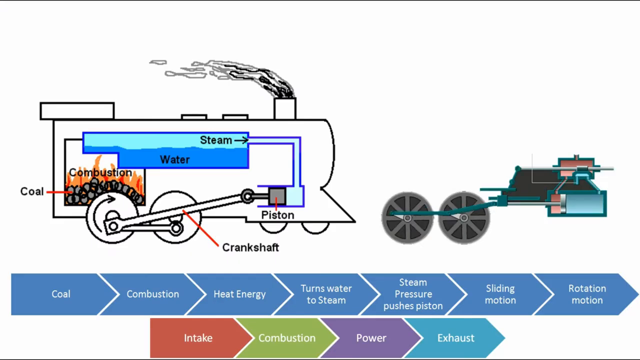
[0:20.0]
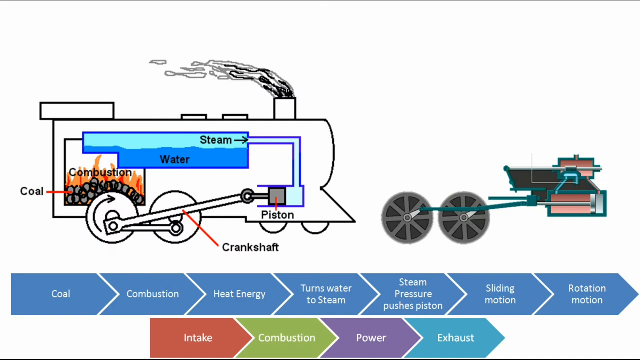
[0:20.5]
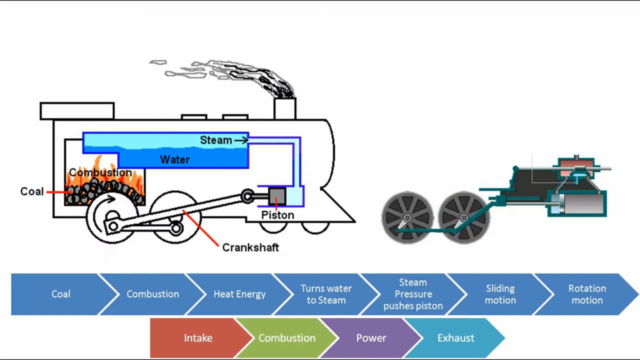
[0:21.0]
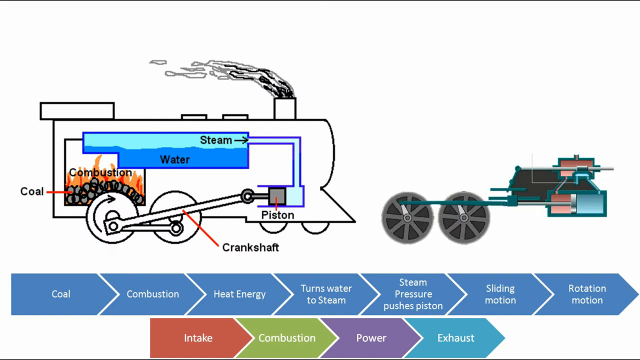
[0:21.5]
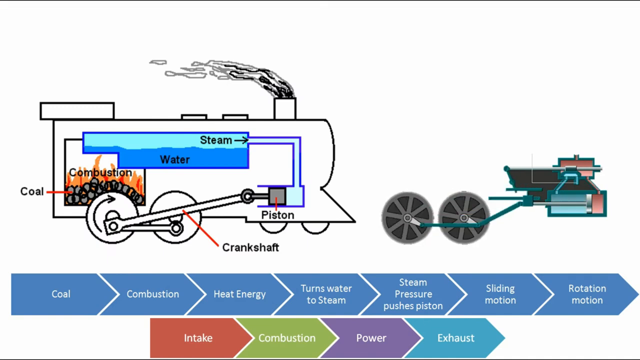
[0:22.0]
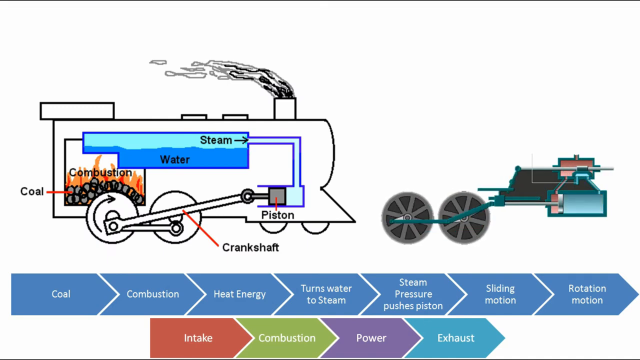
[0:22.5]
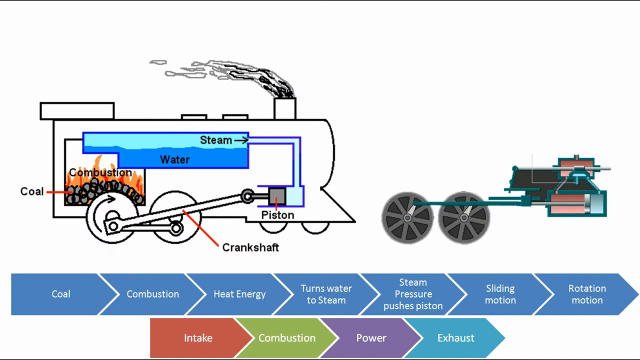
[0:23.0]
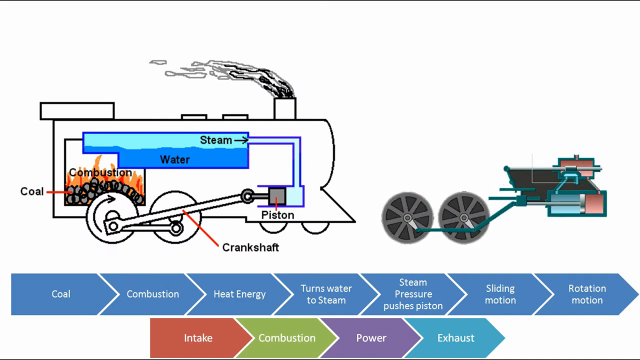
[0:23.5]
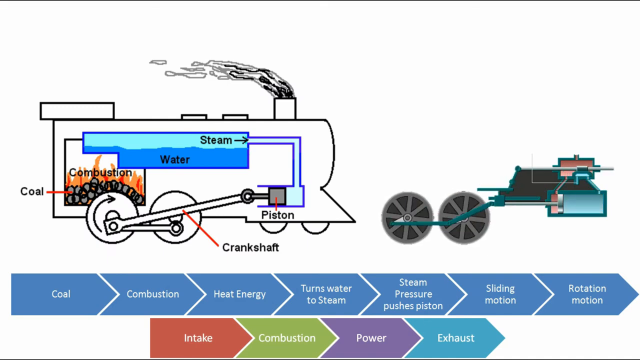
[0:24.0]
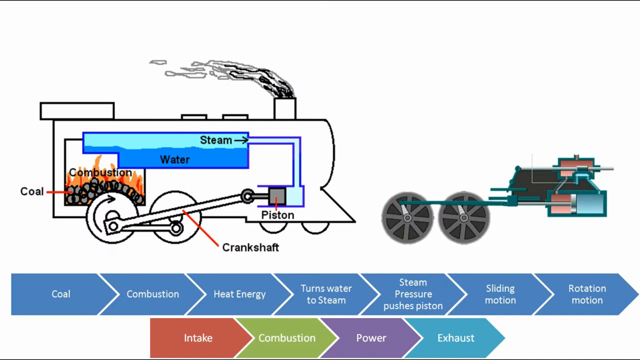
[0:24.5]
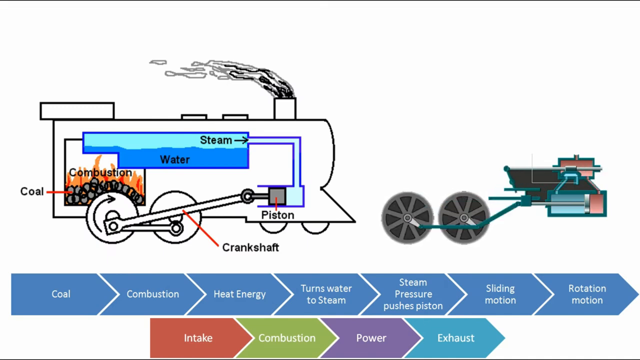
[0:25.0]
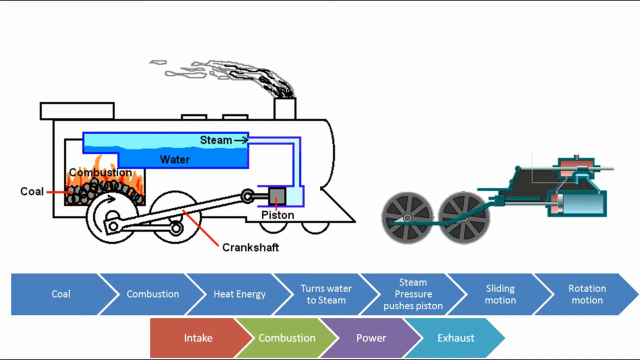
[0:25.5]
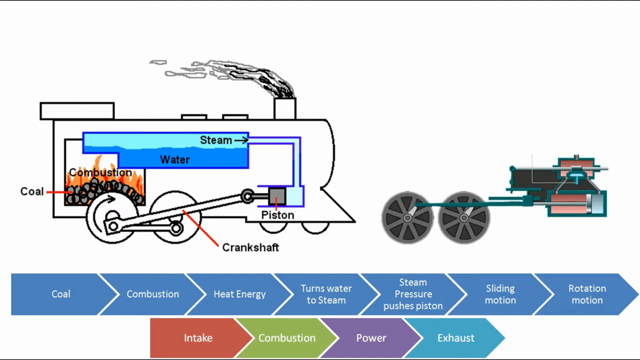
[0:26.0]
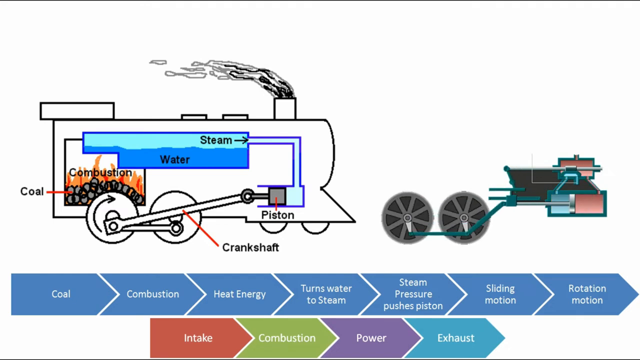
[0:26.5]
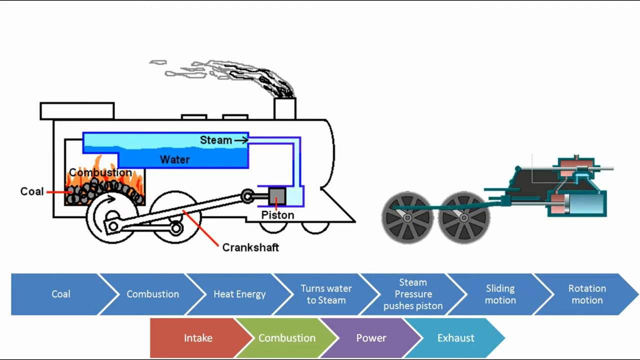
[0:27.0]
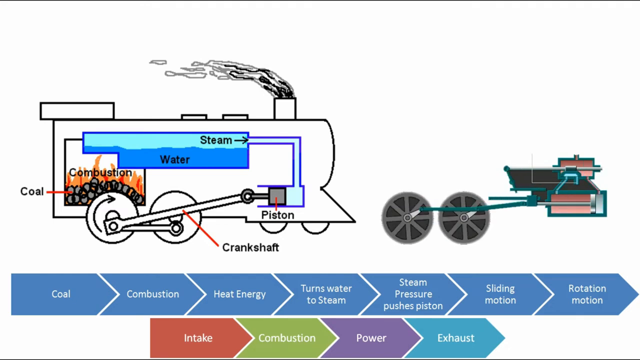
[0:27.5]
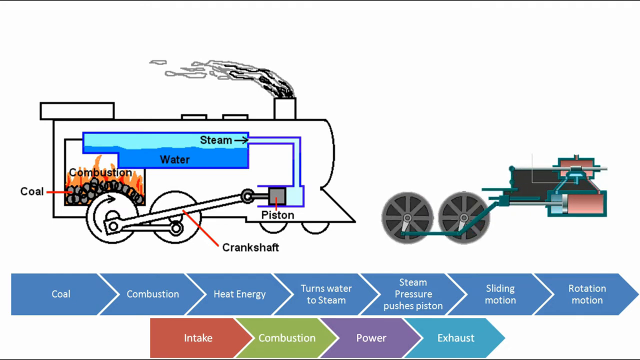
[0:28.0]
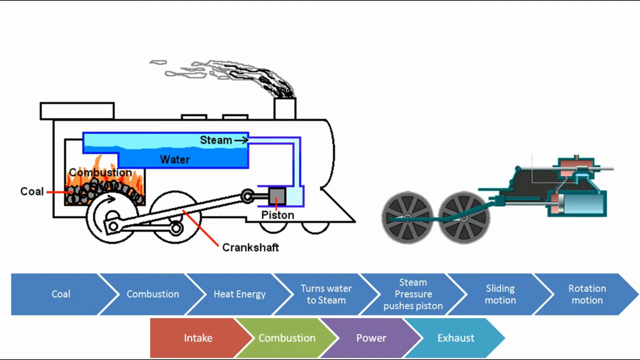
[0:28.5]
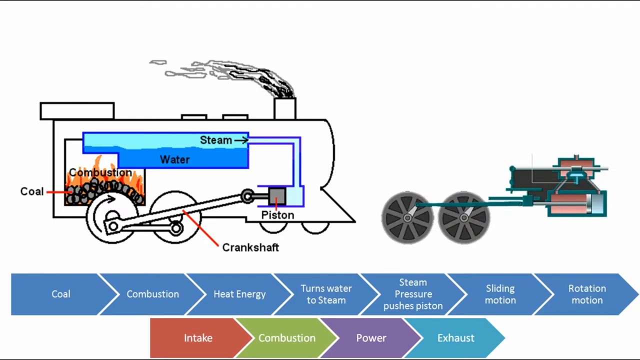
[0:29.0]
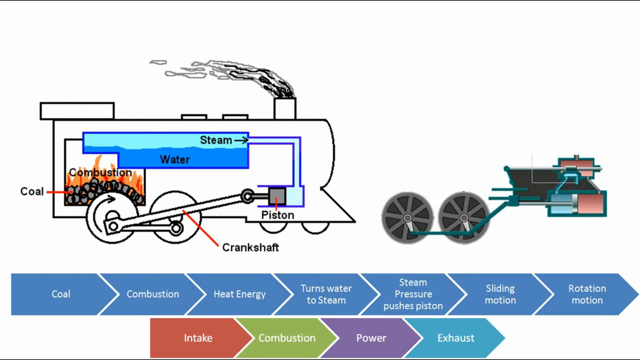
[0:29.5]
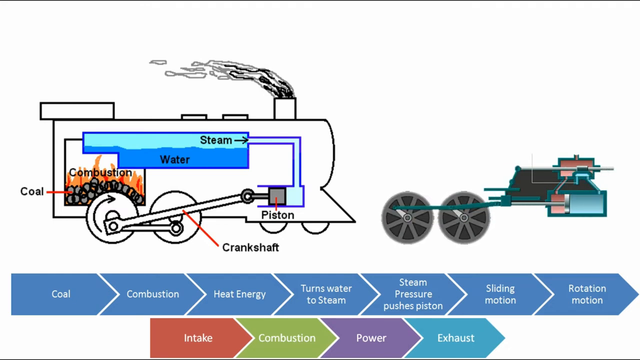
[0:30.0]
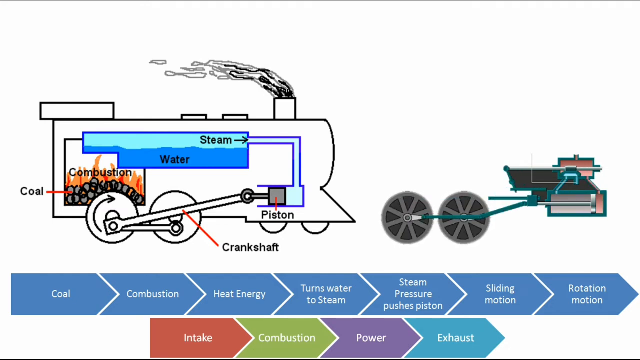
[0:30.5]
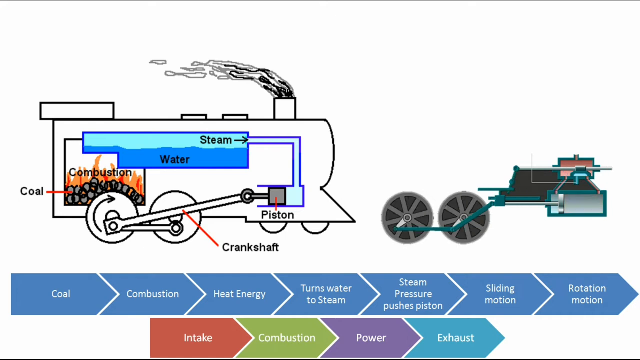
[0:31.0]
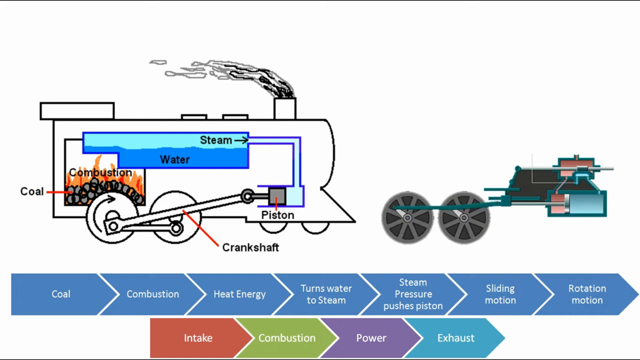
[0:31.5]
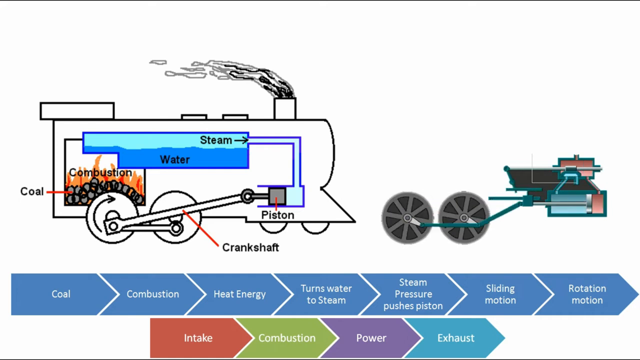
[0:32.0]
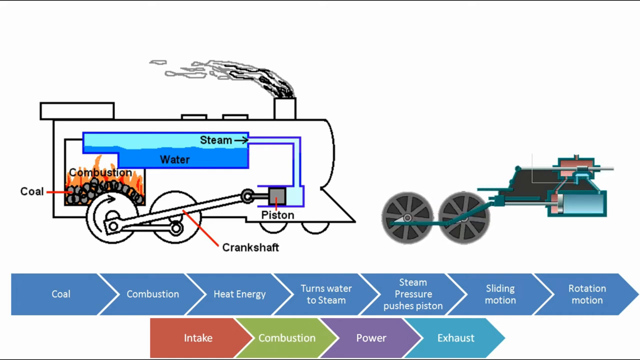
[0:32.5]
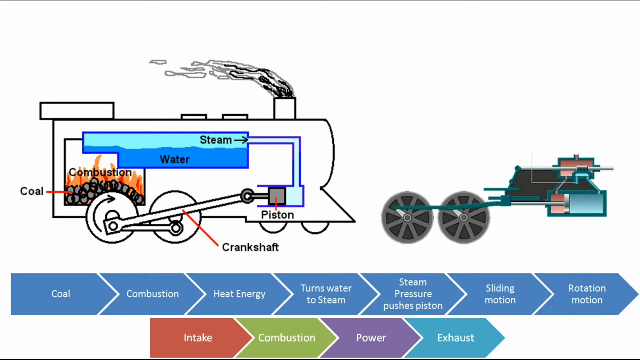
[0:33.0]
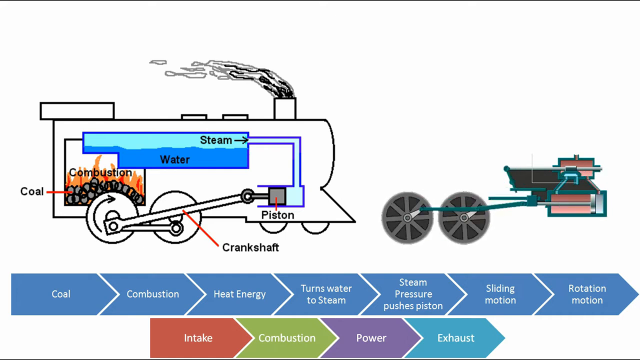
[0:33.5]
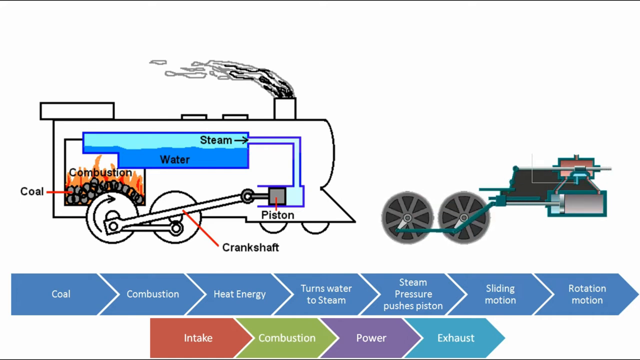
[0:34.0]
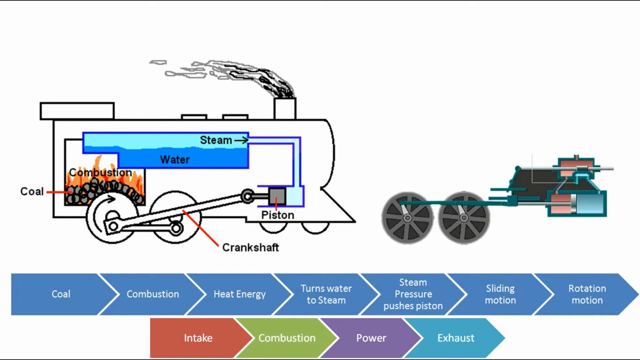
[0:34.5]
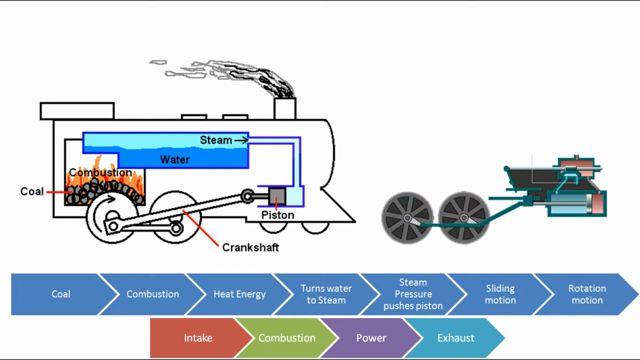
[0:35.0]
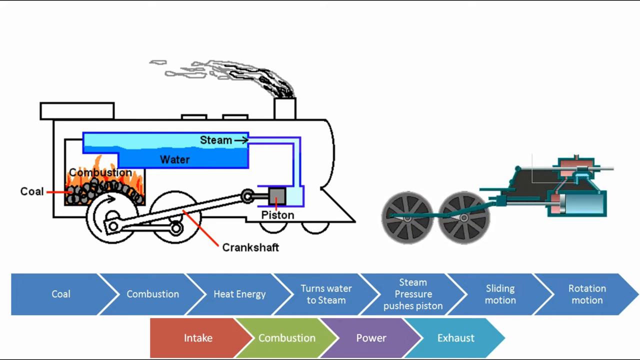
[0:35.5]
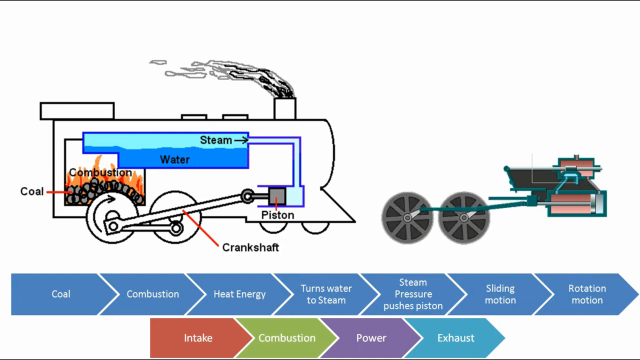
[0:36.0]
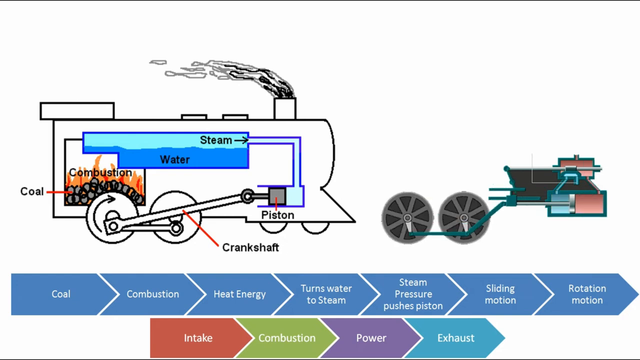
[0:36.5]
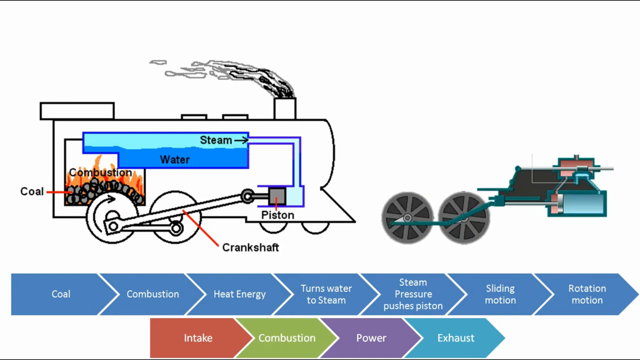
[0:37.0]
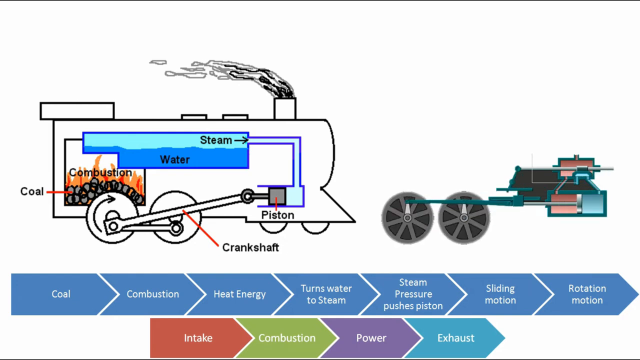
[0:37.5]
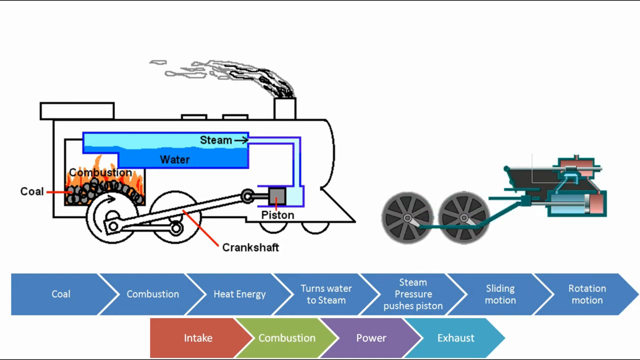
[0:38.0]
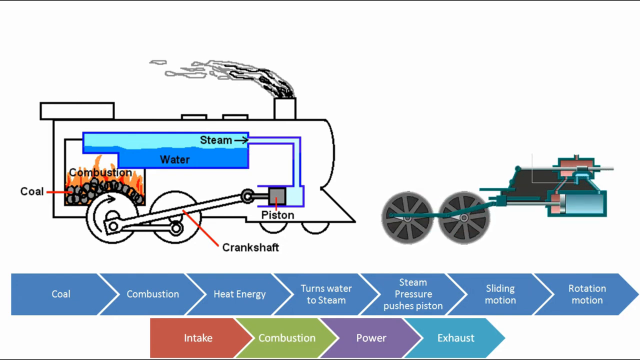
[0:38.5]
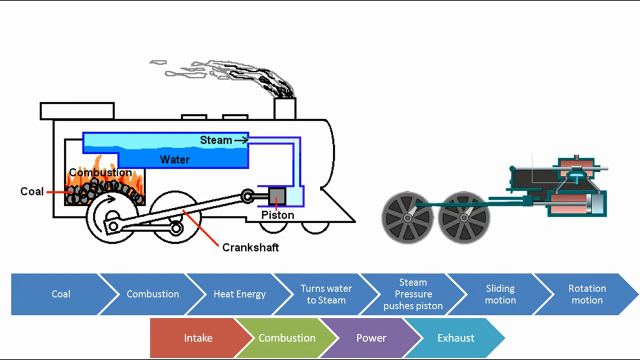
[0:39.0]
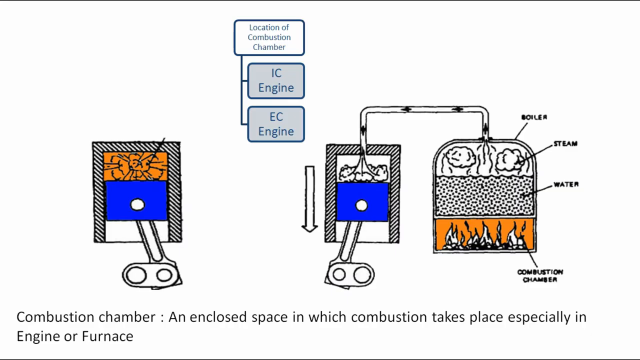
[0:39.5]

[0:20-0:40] The video appears to be a PowerPoint presentation, with what looks like an animated GIF on a white slide. On the left is a diagram of a steam engine drawn with black lines. At its top, water is inside a blue container, and the word "steam" appears at the top of it with a right arrow. A pipe runs to the right and downward and connects to a piston, a gray square labeled "piston." The piston is connected to what looks like a crankshaft joined to two wheels at the bottom left; the crankshaft appears to push the wheels, and an arrow shows a clockwise rotation. At the back of the steam engine, coals that look like black circles are at the bottom, and there is fire with the text "combustion" on it. On the right side is an animated diagram of the same engine, with the piston moving left and right, pushing the crankshaft around and rotating the wheels clockwise; this is the only moving part of the slide. At the bottom is a row of blue arrows going from left to right, each containing white text, reading from left to right: "coal," "combustion," "heat energy," "turns water to steam," "steam pressure pushes piston," "sliding motion," "rotation motion." Below that are a red arrow, a green arrow, a purple arrow and a blue arrow with white text reading "intake," "combustion," "power," "exhaust." The video then changes to another slide with a white background. At the top, what looks like a white rectangle reads "location of combustion chamber," and it connects to two rectangles below it, one reading "IC engine" and the other "EC engine." There are two pictures of what look like chambers. The left one is white at the bottom, blue in the middle and apparently orange at the top, and is connected to what looks like a crankshaft arm. The right picture appears to show two separate chambers. The right chamber seems to have fire at the bottom, labeled "combustion chamber," then water and then steam; this is the boiler. A pipe leads from it upward to the left and down into the second chamber, where there appears to be water and steam going down into it, and this chamber is connected to a crankshaft arm, with a downward angle. At the bottom, black text reads "combustion chamber, an enclosed space in which combustion takes place, especially an engine or furnace."